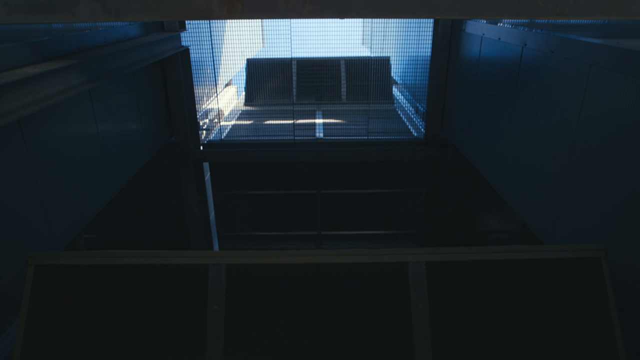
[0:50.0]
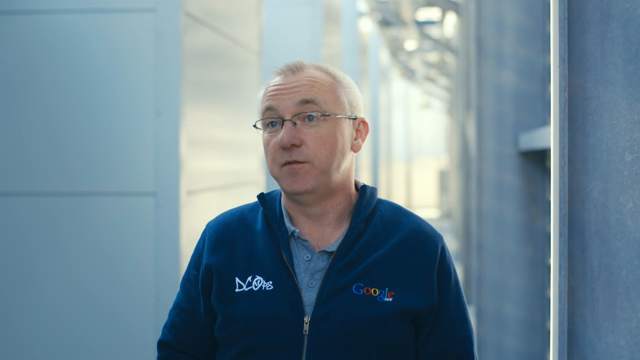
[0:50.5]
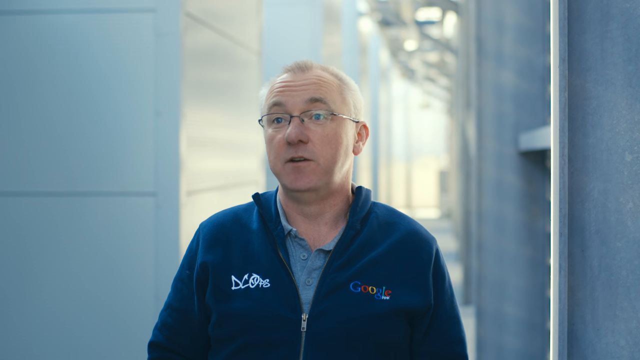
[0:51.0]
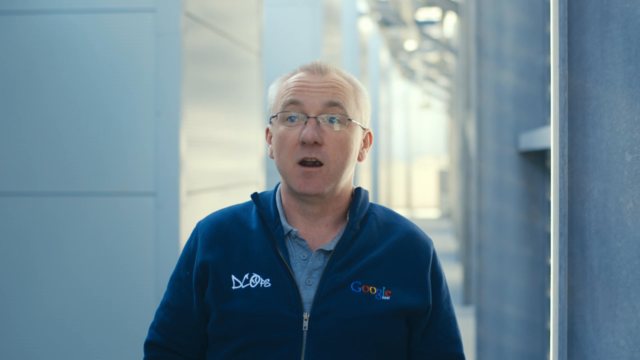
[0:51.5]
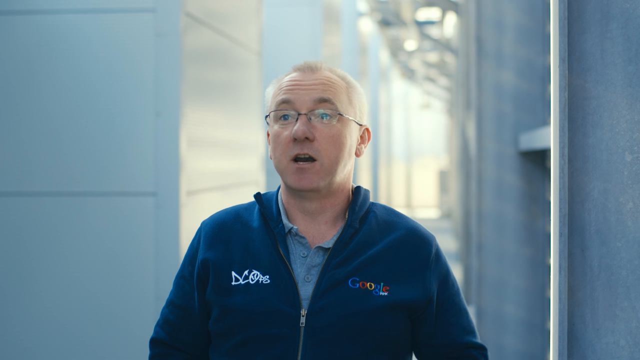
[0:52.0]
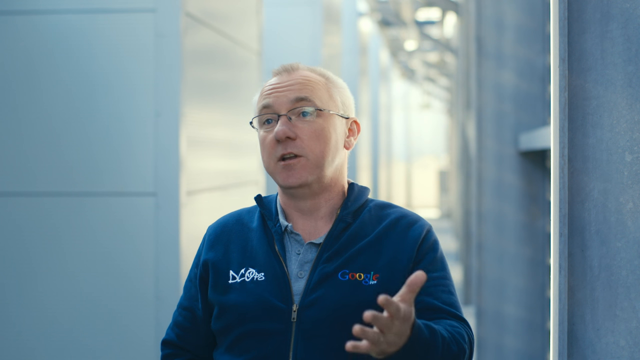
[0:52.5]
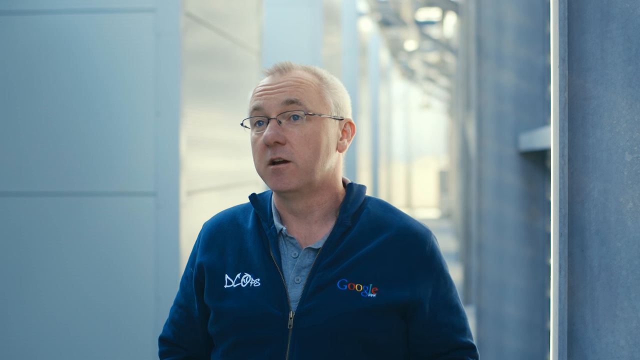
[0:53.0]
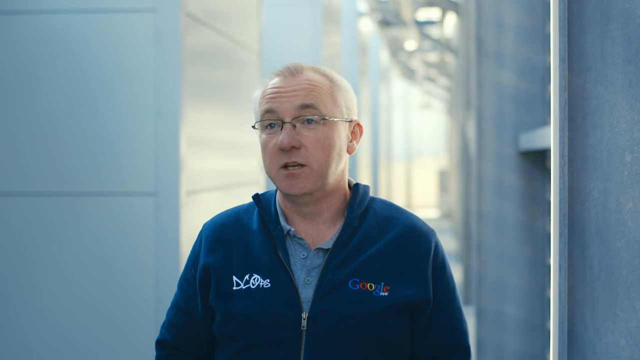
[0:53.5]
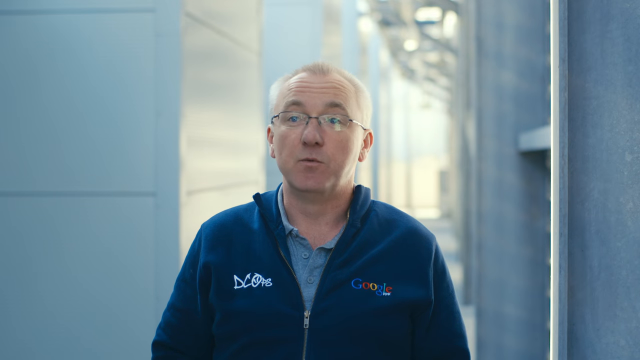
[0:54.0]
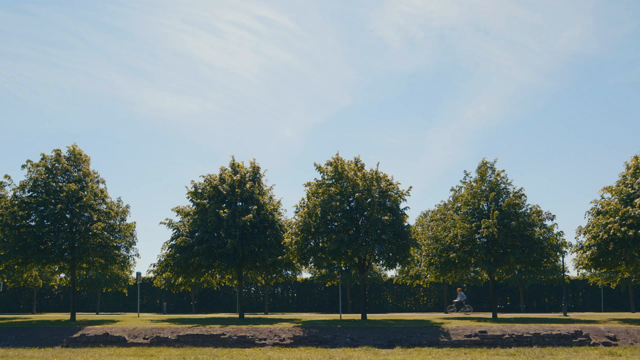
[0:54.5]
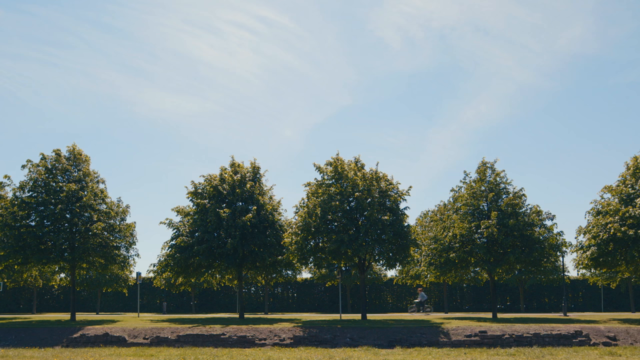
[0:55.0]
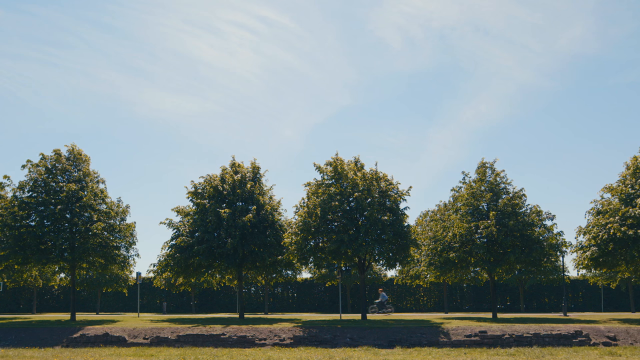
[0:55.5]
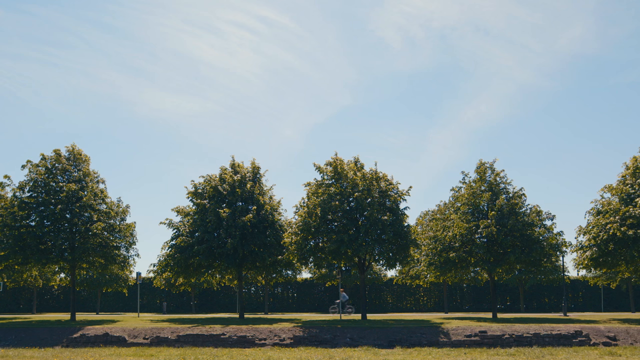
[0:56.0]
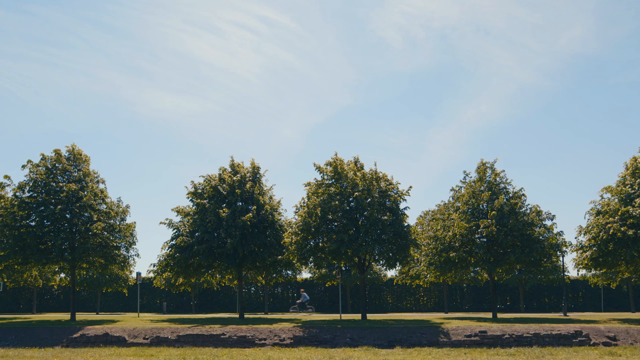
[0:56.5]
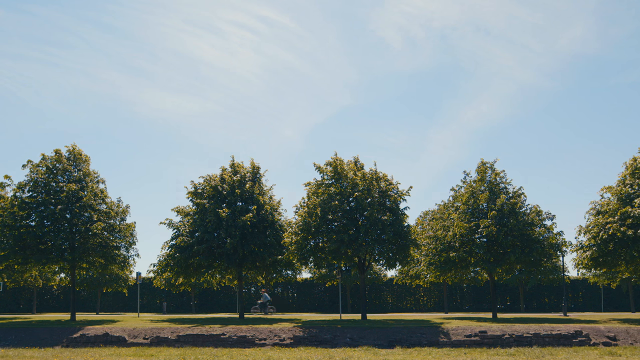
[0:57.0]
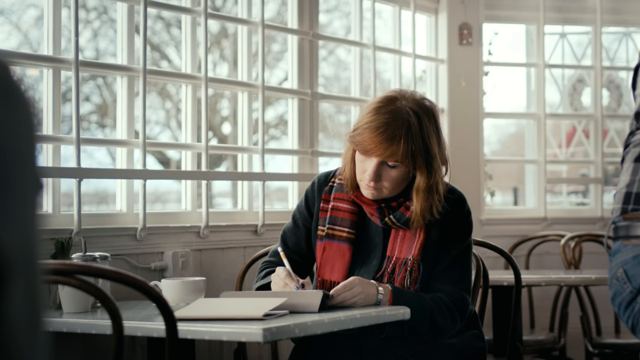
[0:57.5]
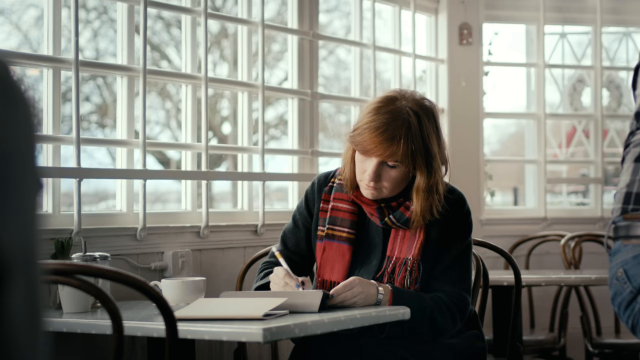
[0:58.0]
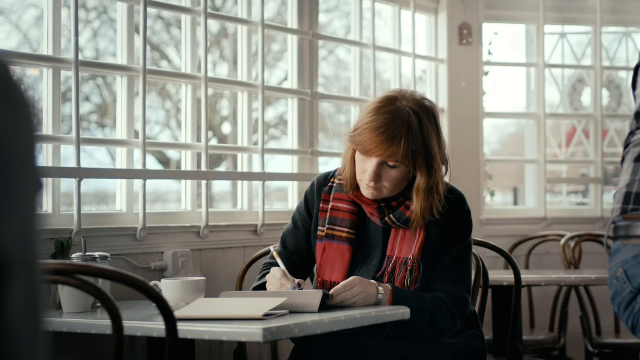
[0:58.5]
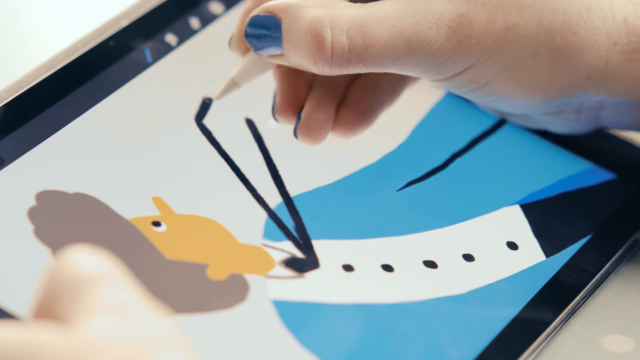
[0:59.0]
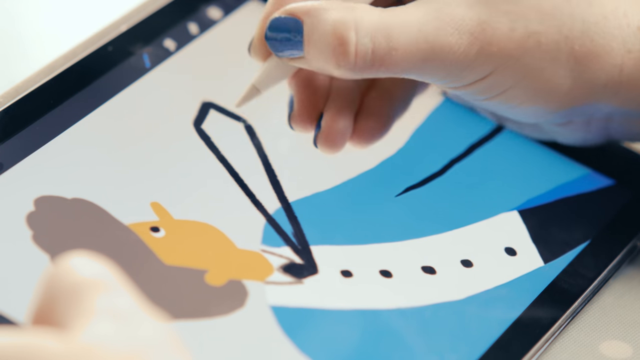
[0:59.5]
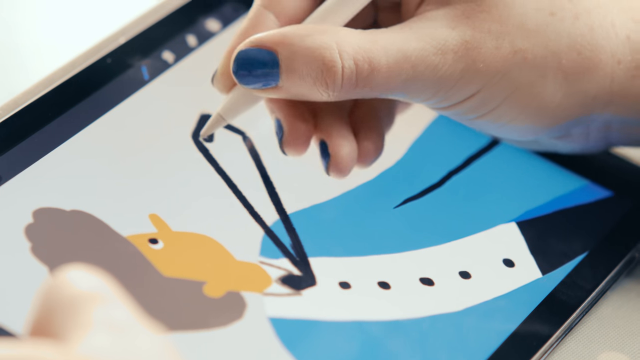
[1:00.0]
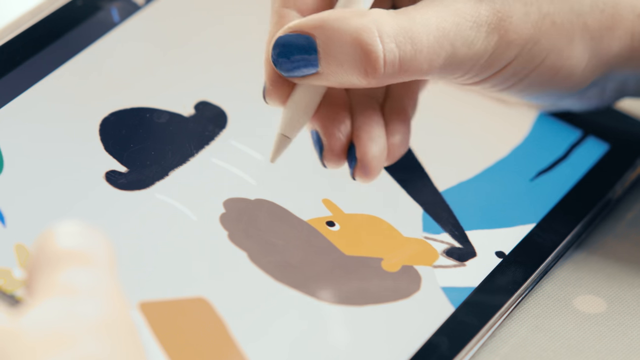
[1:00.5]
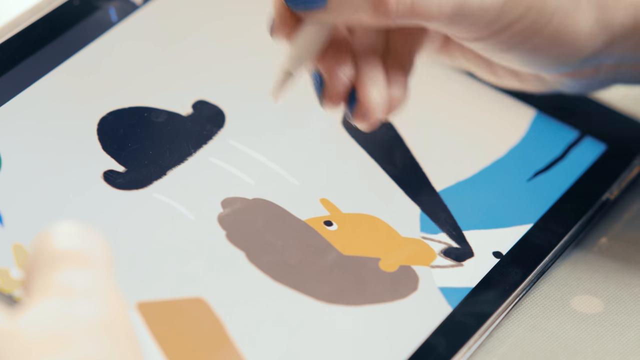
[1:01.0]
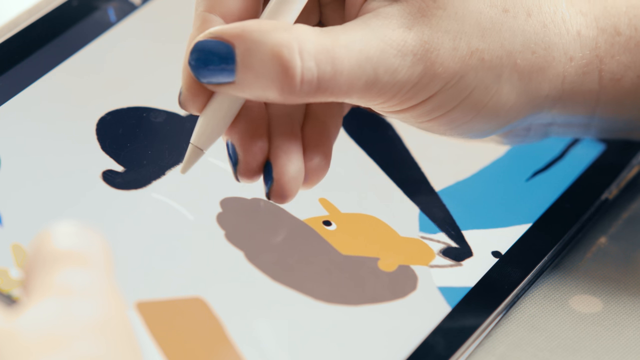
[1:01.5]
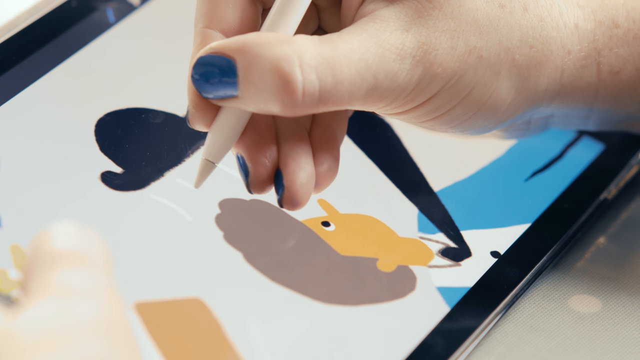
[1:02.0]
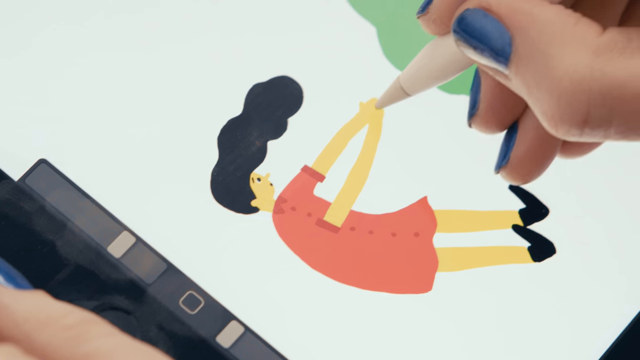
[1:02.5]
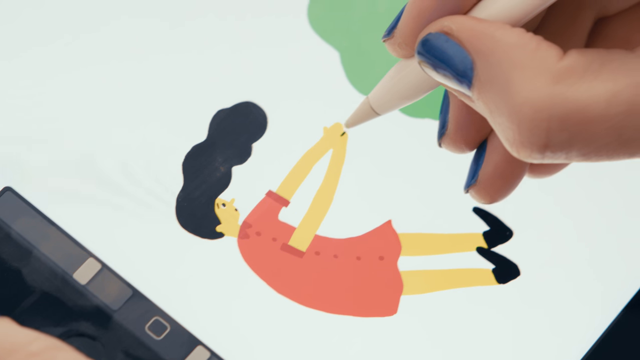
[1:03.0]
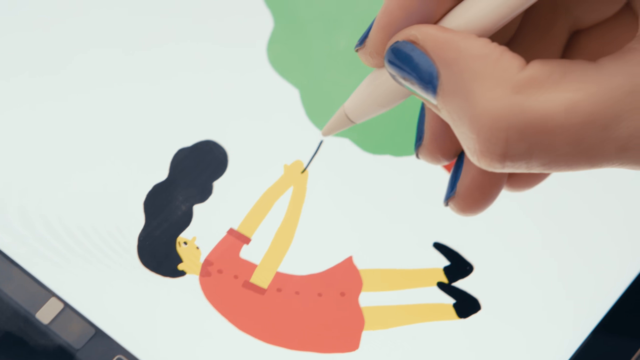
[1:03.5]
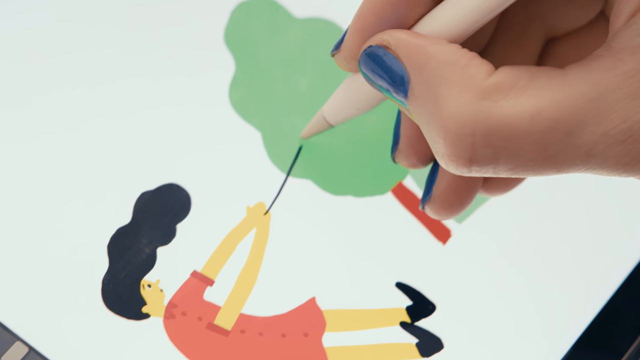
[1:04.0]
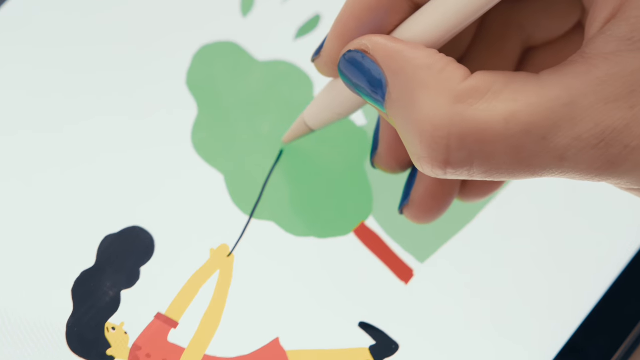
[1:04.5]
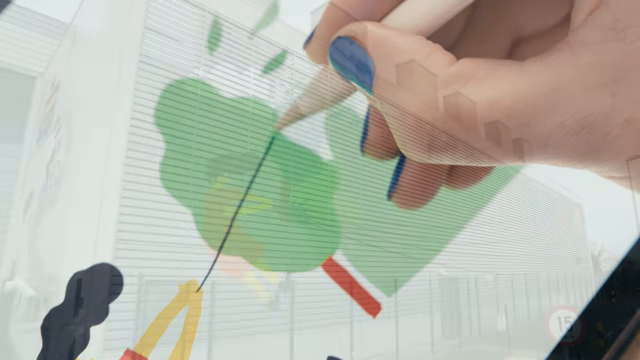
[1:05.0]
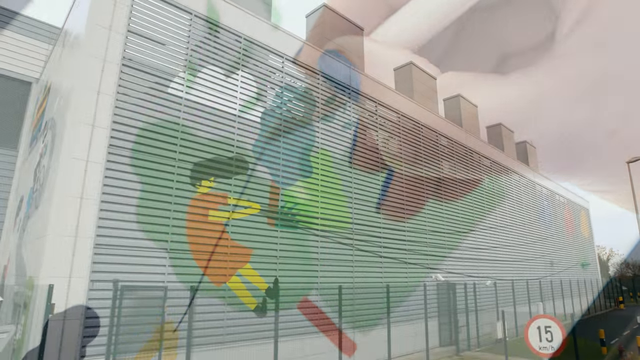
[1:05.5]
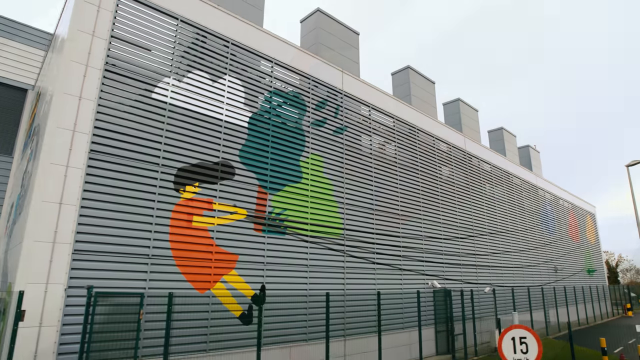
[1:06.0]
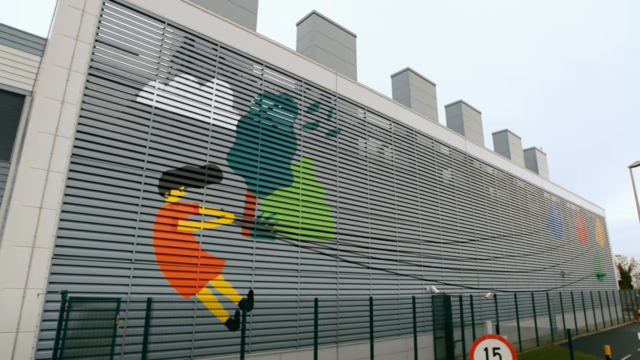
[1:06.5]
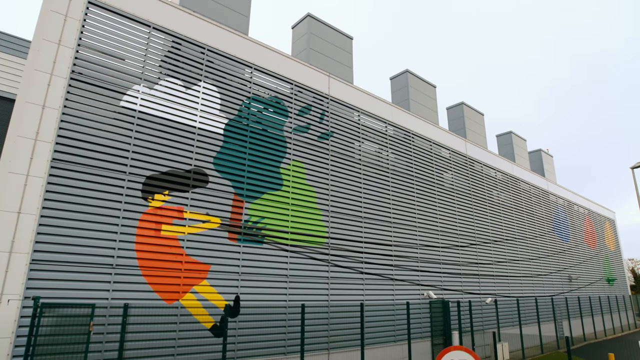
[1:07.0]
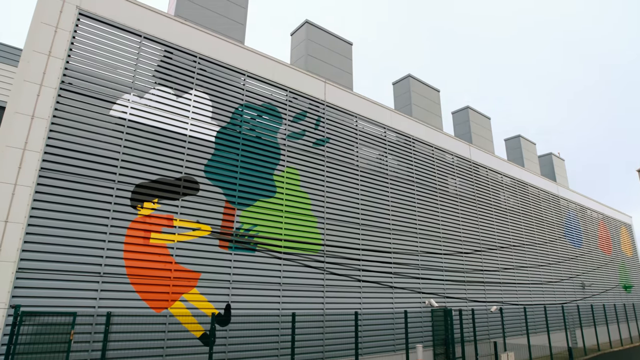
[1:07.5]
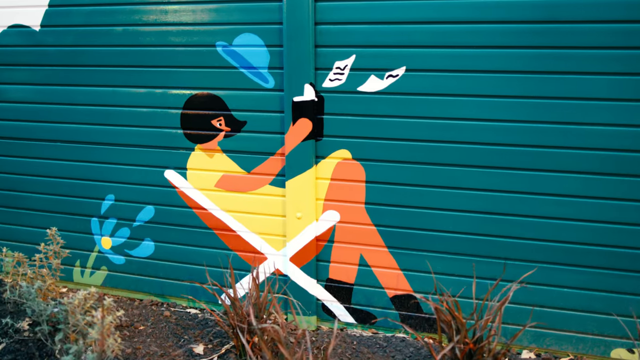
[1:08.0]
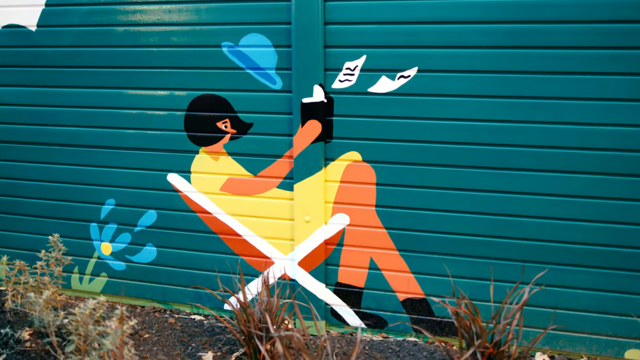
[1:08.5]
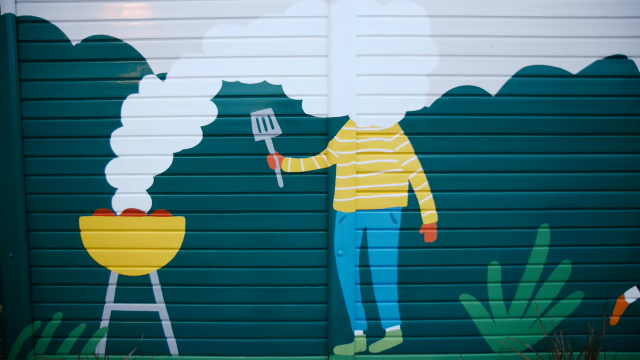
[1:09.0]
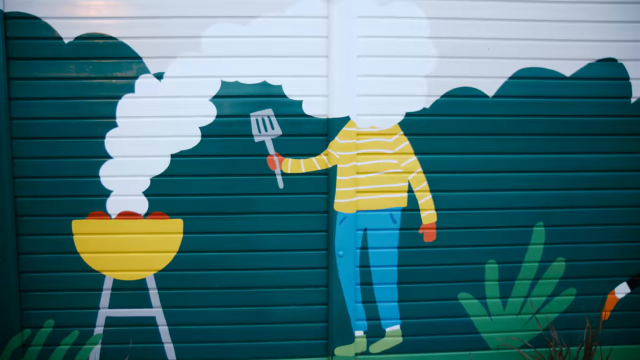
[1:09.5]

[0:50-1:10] The camera pans over to what looks like a vent system, then shows the man who was showing Fuchsia around the complex, apparently named Paul. He is talking, seemingly giving an interview; he wears glasses, has short white hair, and wears a gray polo shirt under a blue garment that looks like a cardigan. Fuchsia is then seated in what looks like a cafe, wearing a black hat, a red, flannel-like scarf and a black coat, and drawing on her iPad. The drawing appears to be a man in a black tie who seems to be falling, with his black bowler hat falling onto his head. Her artwork is then shown featured on the industrial building she toured: a woman sitting down, or apparently being blown, while holding on to what may be balloons, next to a tree, painted across the entire side of the building. Another painting shows someone seated having their hat blown off, and another shows a man holding a spatula in front of a smoking barbecue, with the smoke covering his face. The sequence ends with two people in what look like wetsuits jumping into water.